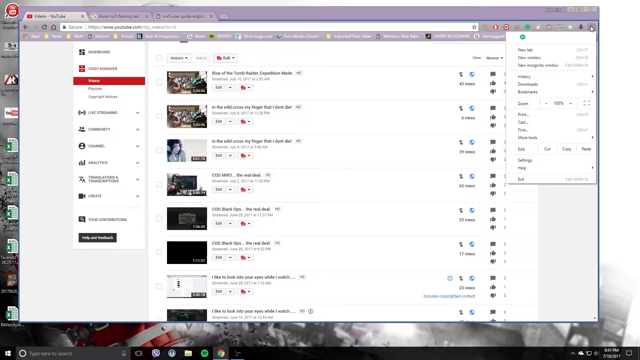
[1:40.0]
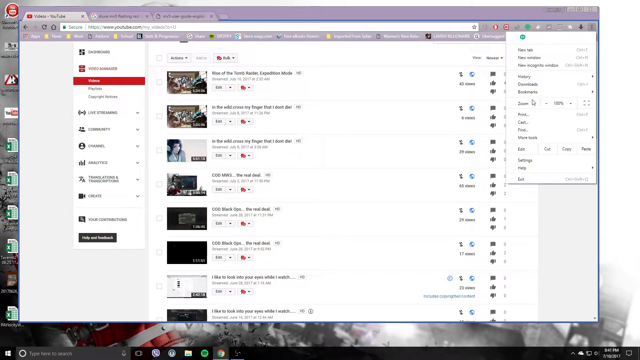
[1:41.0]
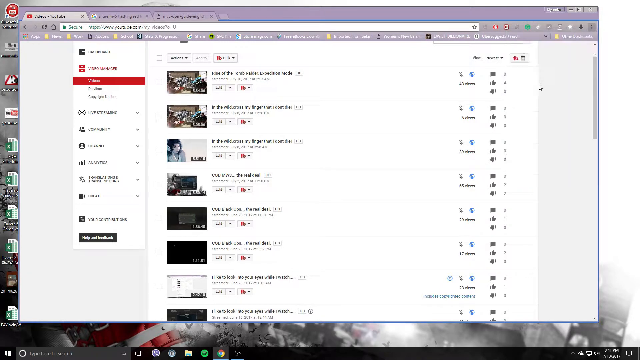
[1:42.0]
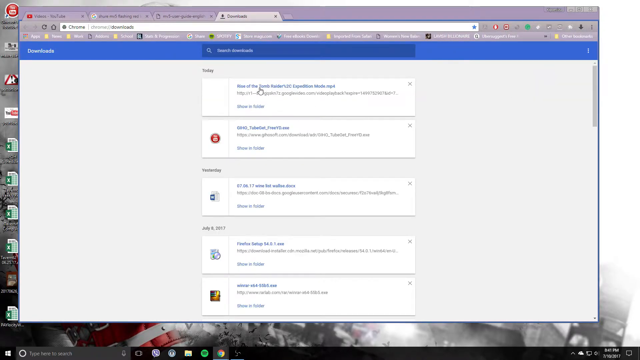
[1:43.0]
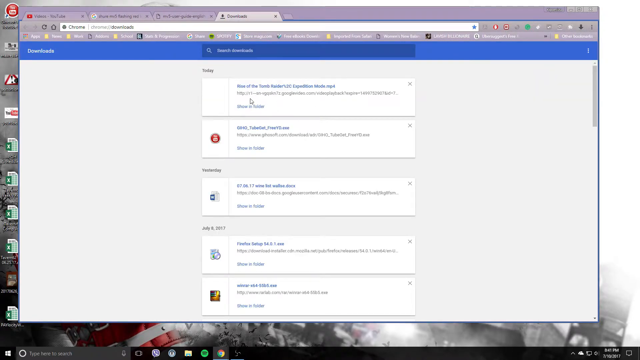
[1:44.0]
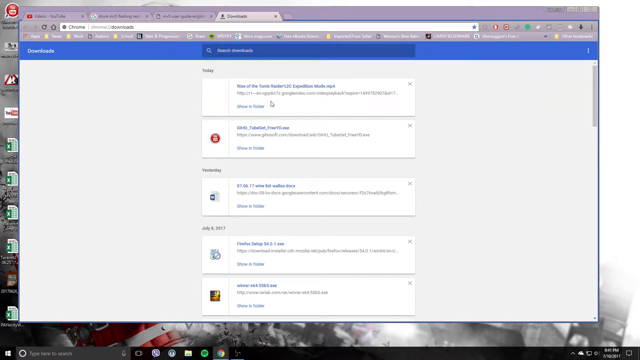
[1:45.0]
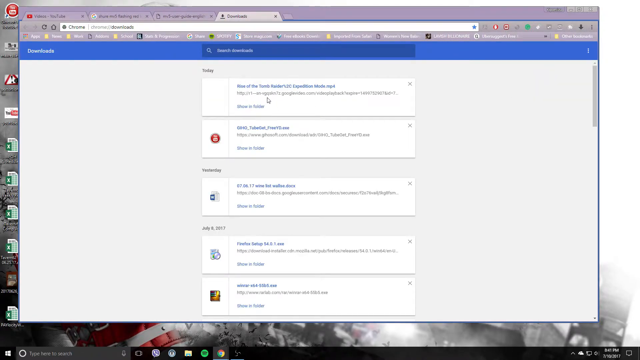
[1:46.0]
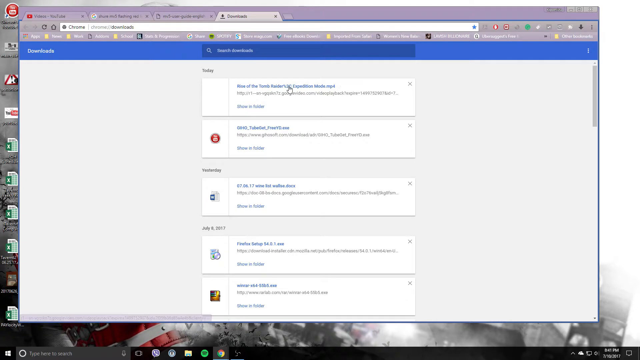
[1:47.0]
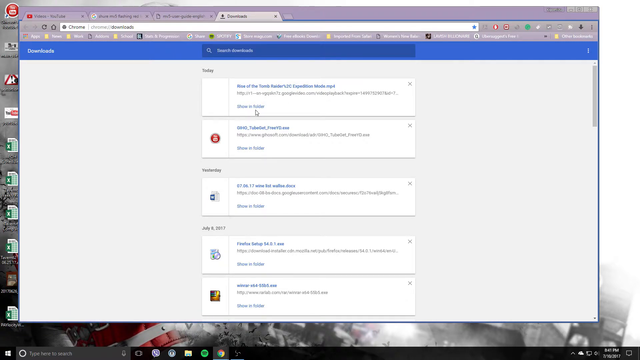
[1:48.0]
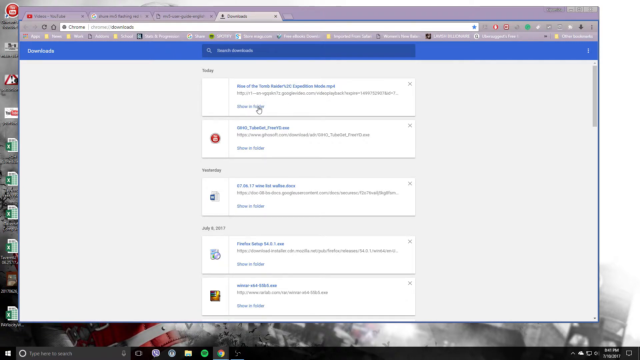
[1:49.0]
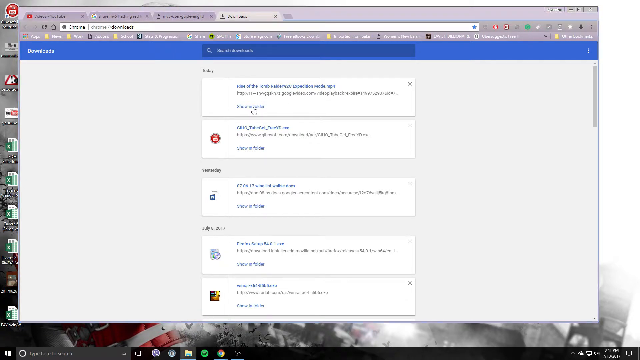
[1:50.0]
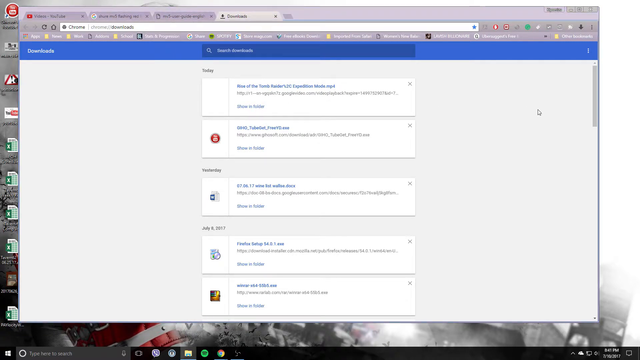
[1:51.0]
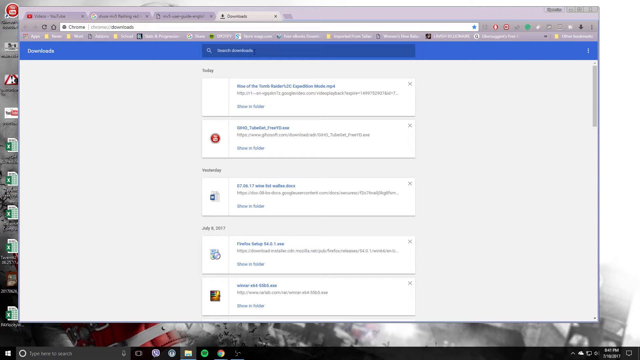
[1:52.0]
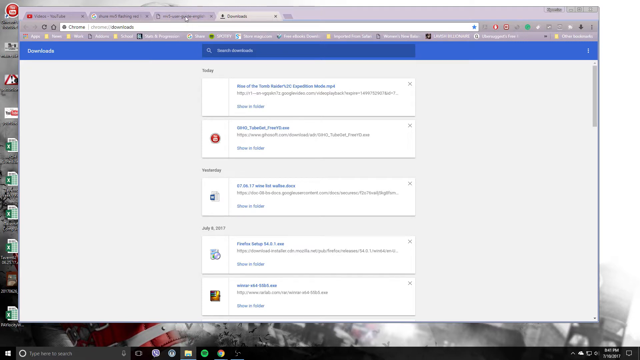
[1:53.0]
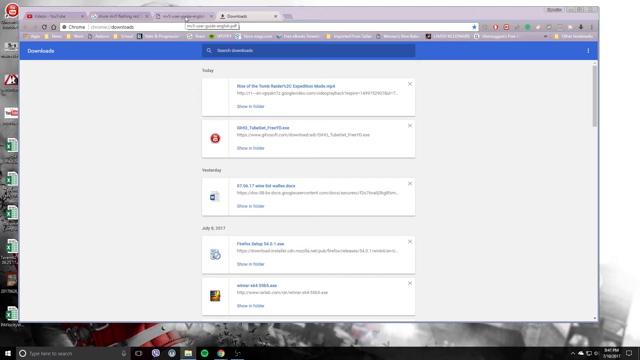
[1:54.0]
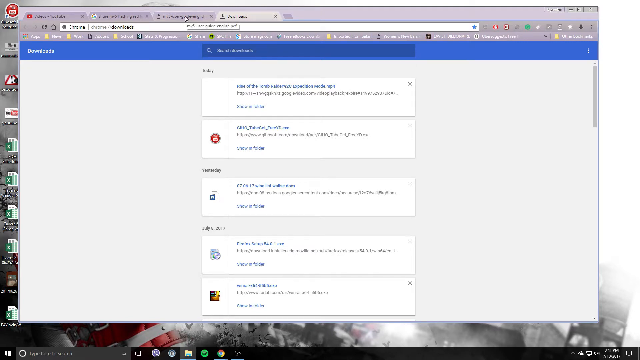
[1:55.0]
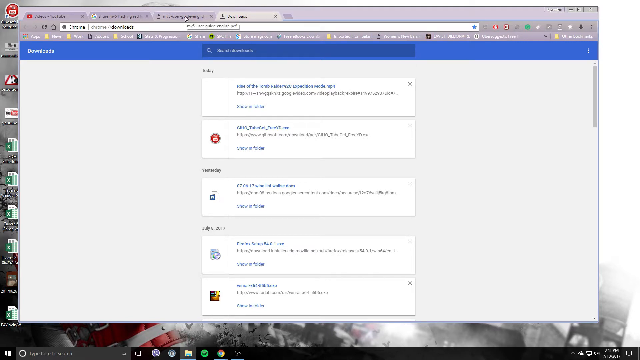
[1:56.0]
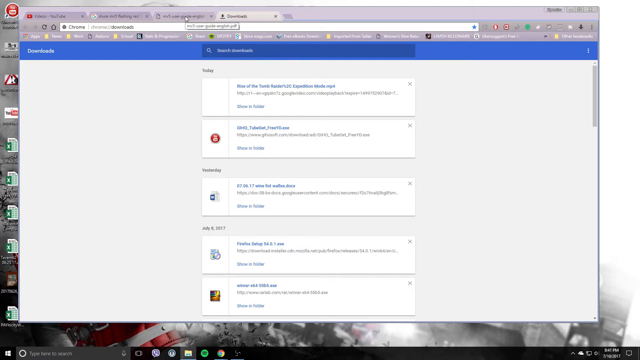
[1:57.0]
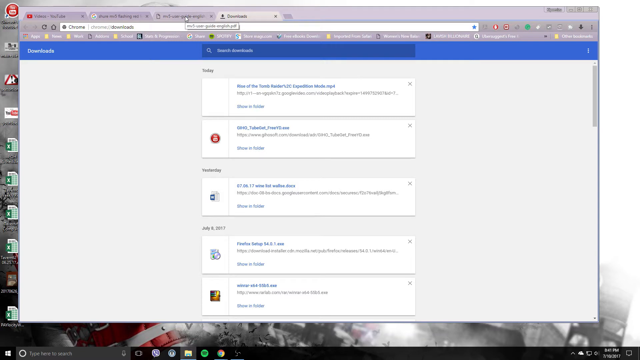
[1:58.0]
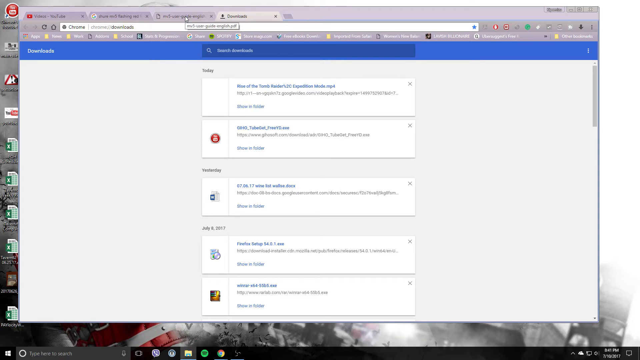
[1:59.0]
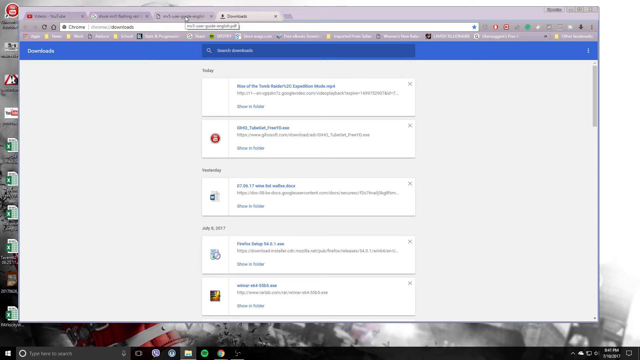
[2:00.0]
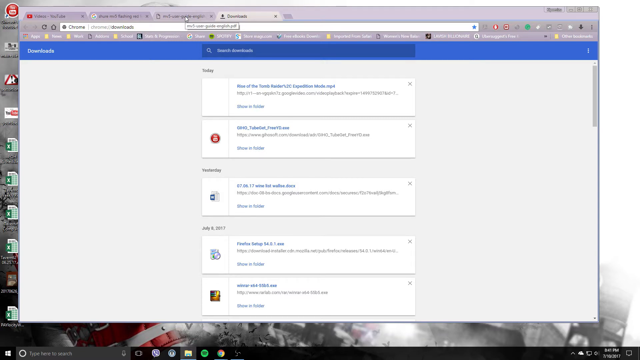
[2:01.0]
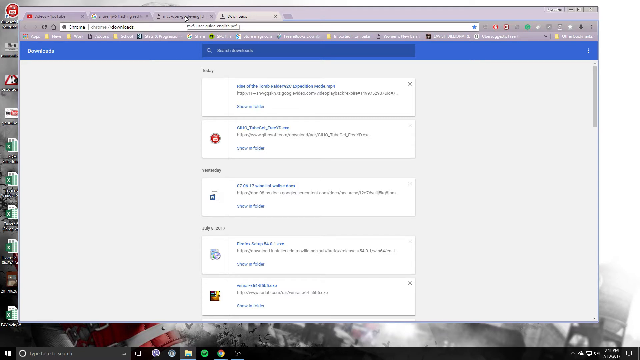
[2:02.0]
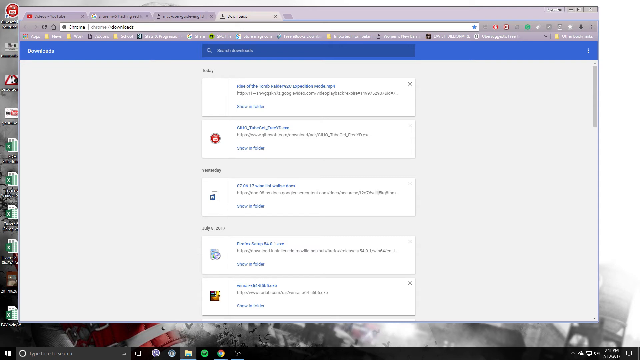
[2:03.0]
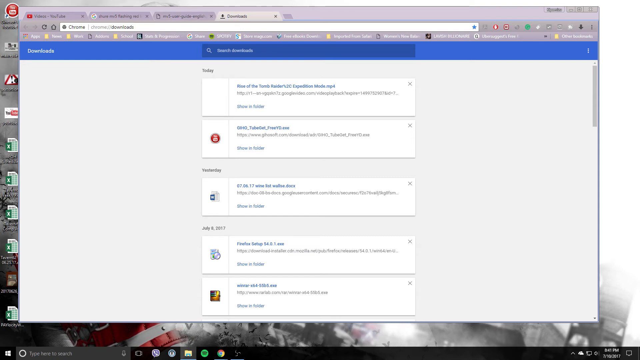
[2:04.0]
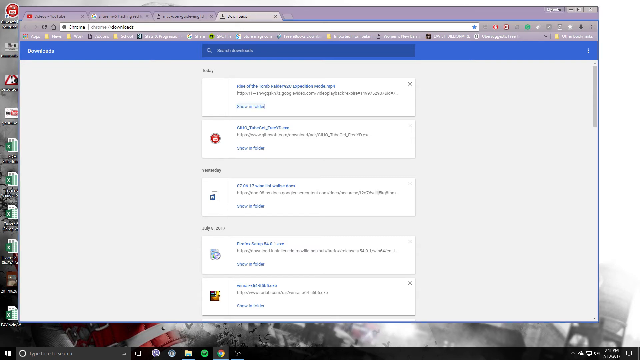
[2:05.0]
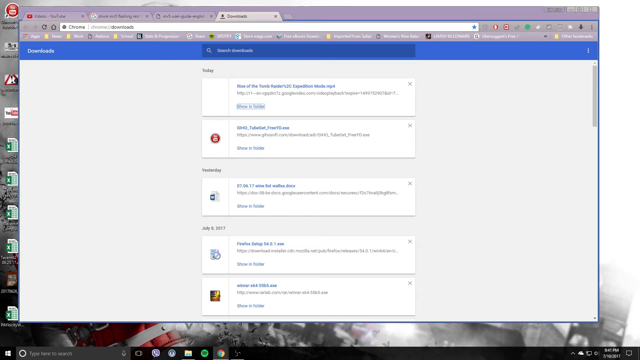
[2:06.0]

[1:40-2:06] YouTube's website is shown in a tab that does not fill the entire screen; the desktop of the user's computer is sort of visible behind it, but not enough to make anything out. A couple more tabs are visible at the top. The page appears to be the Videos tab of the user's profile rather than the home screen. The cursor is on the right side with a menu open that has new tabs, apparently sort of the Google menu. It selects what looks like database, and a new page opens with a white background and boxes of blue text too small to read. This appears to be a downloads tab. The cursor moves around, hovers over another tab whose text cannot be read, and moves around a bit more.